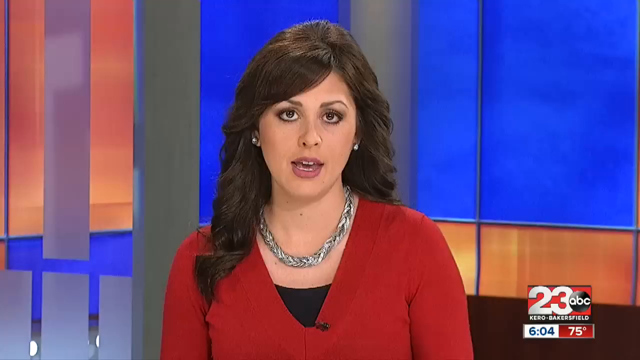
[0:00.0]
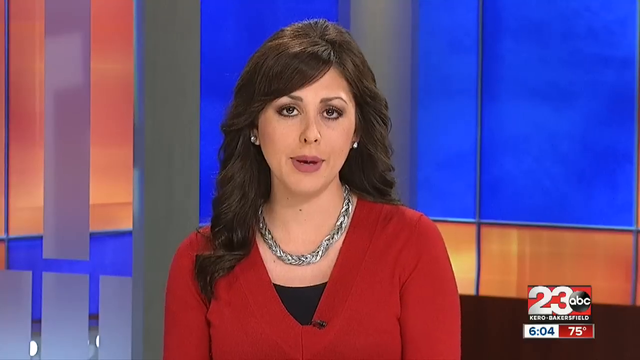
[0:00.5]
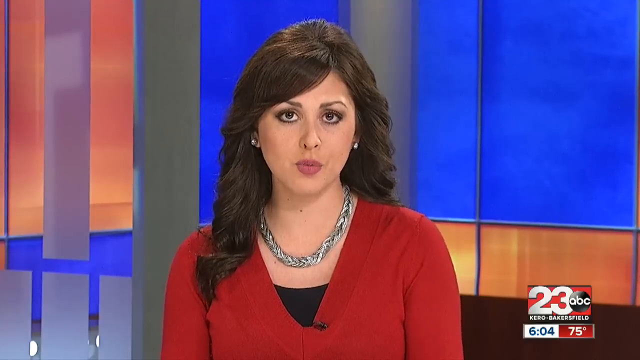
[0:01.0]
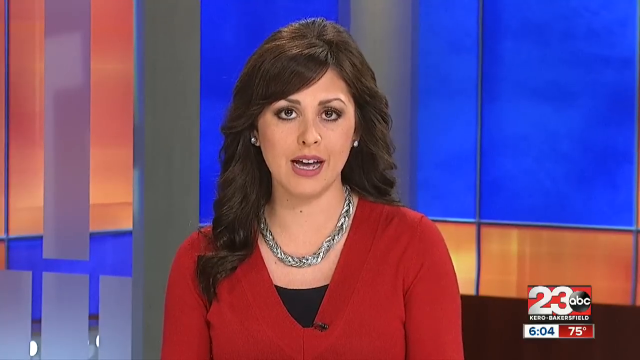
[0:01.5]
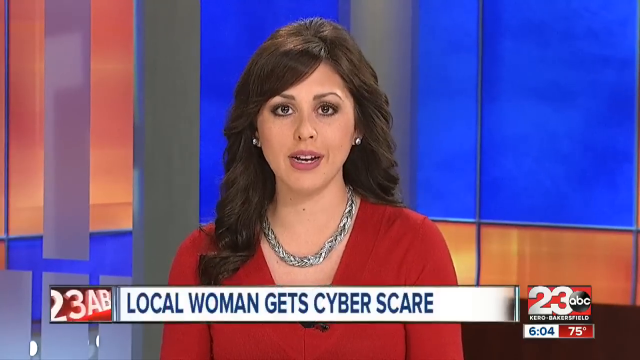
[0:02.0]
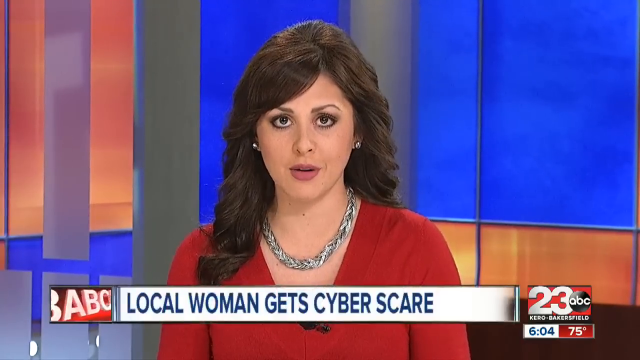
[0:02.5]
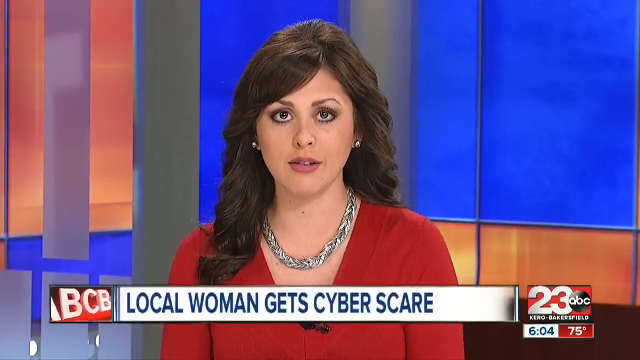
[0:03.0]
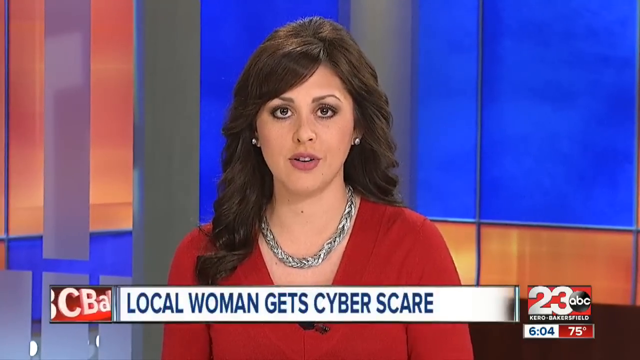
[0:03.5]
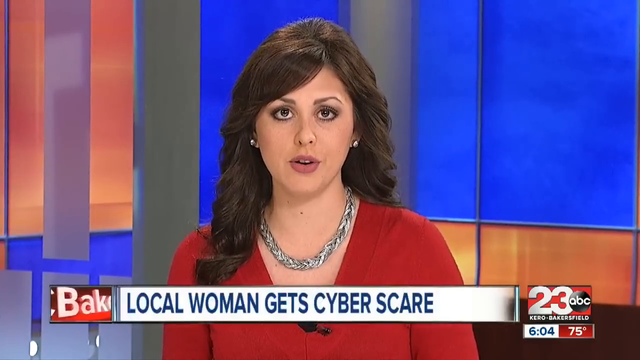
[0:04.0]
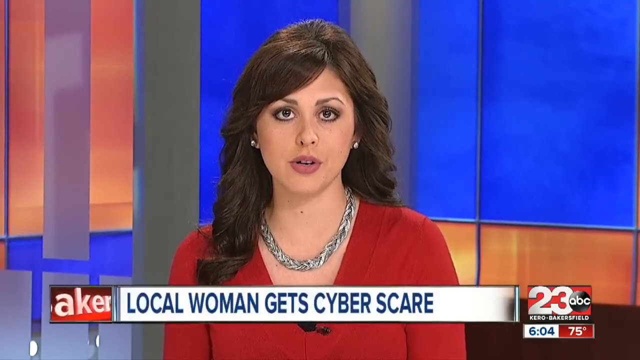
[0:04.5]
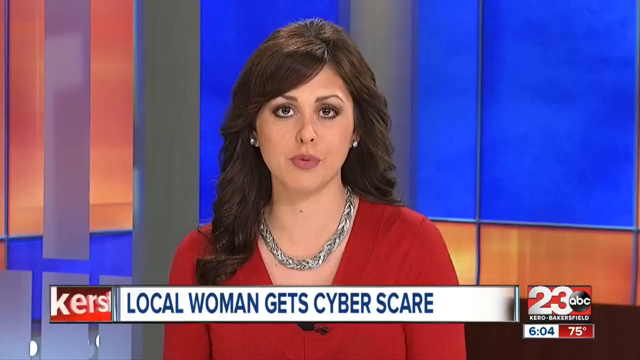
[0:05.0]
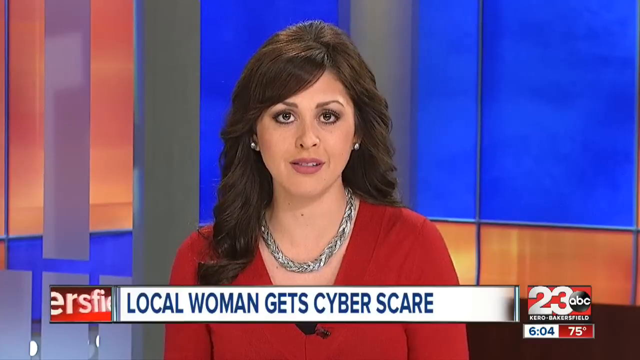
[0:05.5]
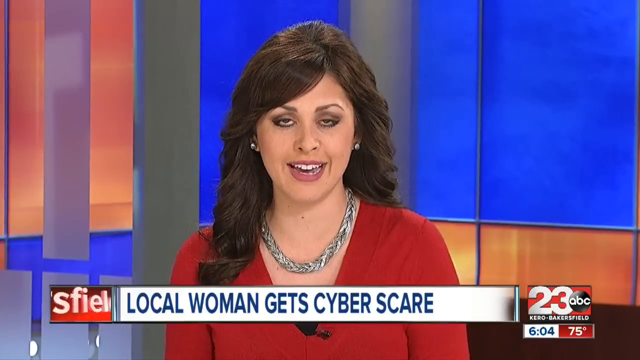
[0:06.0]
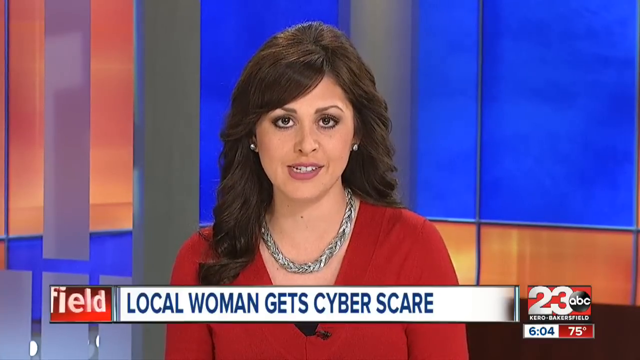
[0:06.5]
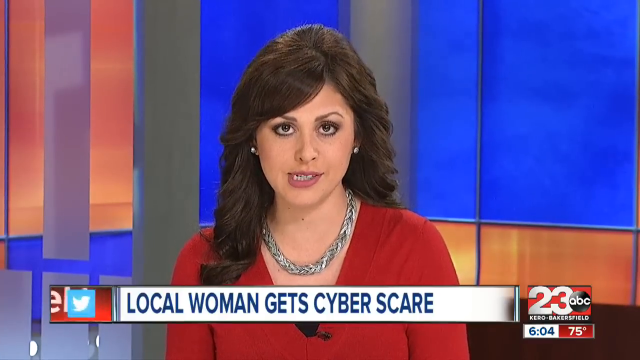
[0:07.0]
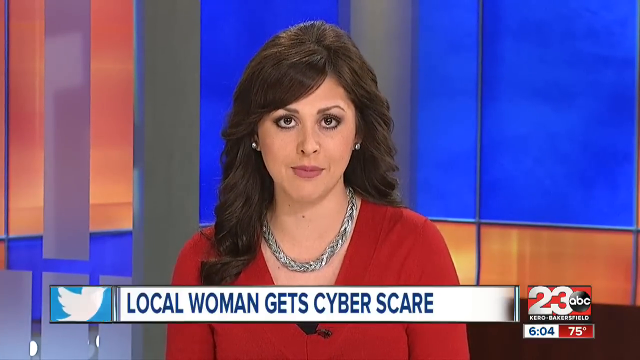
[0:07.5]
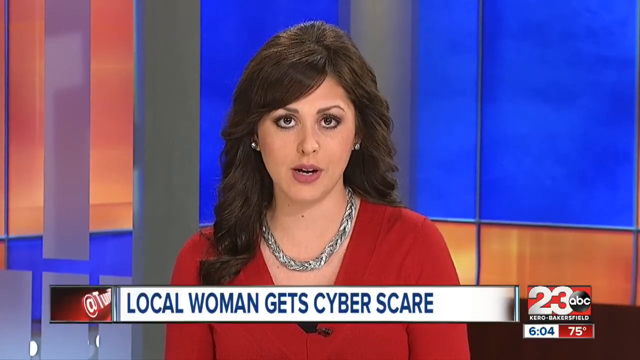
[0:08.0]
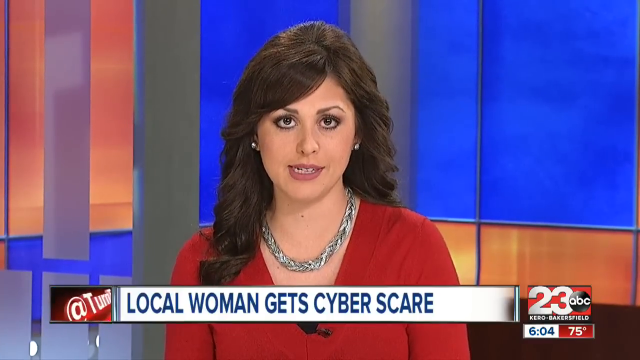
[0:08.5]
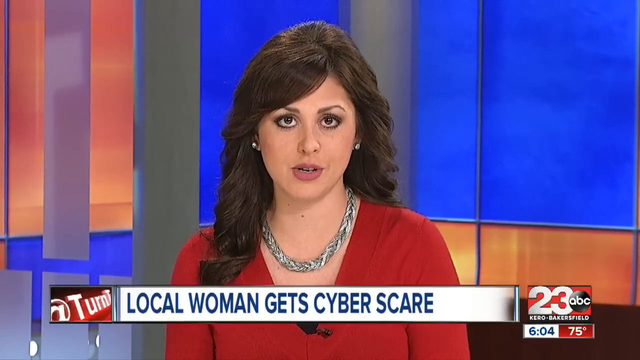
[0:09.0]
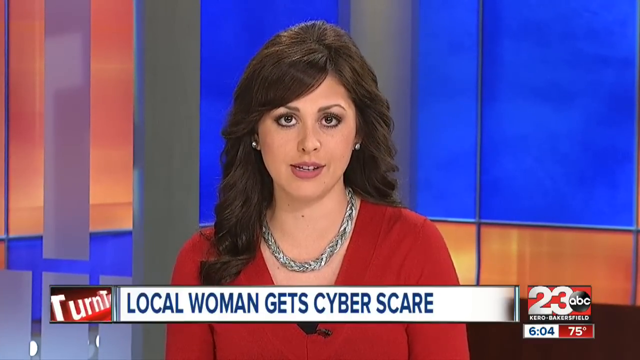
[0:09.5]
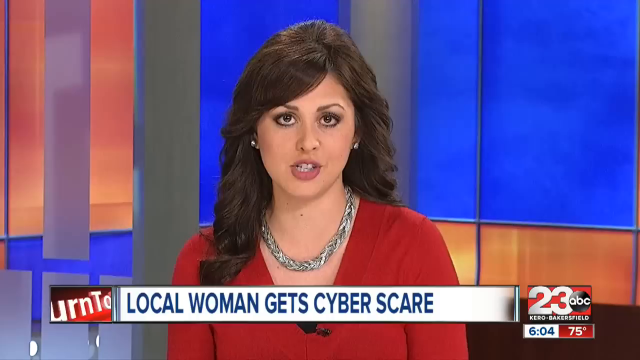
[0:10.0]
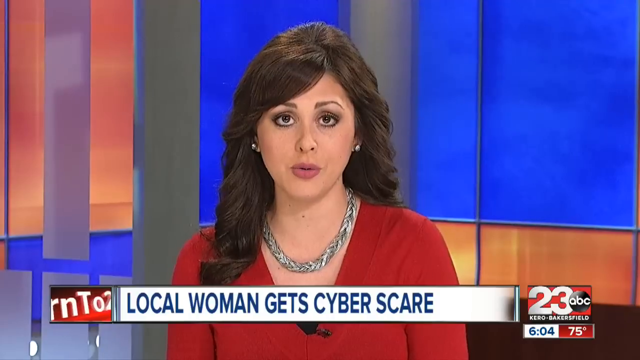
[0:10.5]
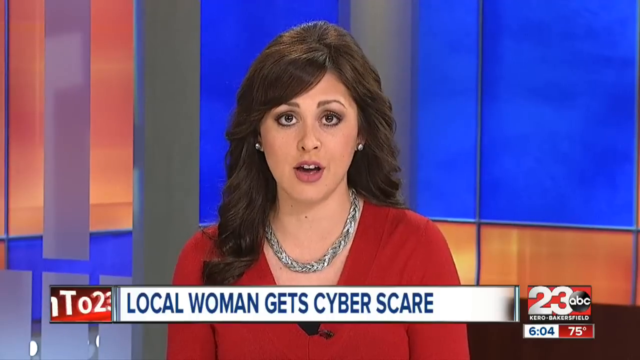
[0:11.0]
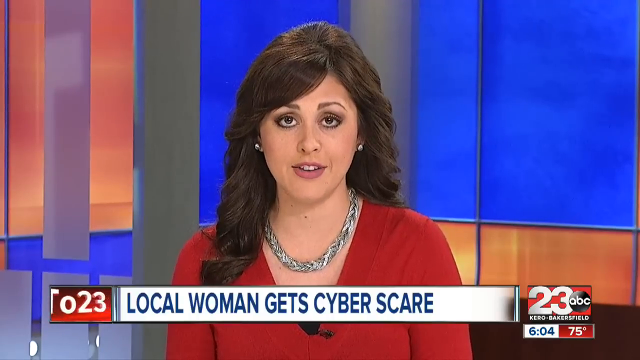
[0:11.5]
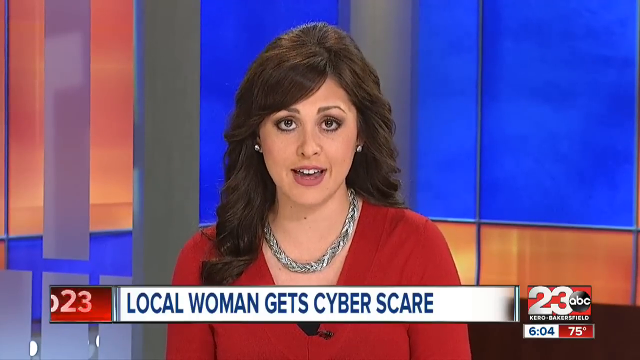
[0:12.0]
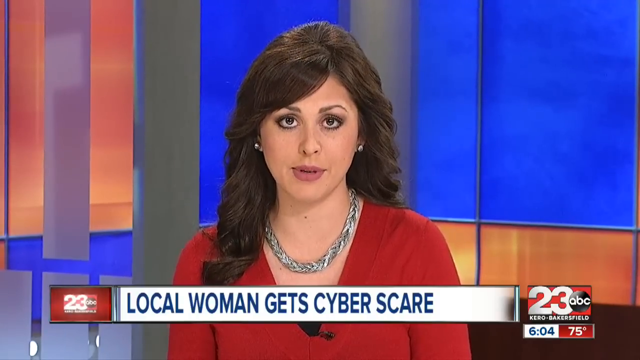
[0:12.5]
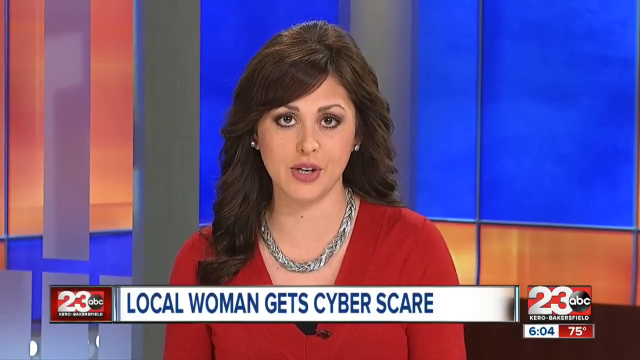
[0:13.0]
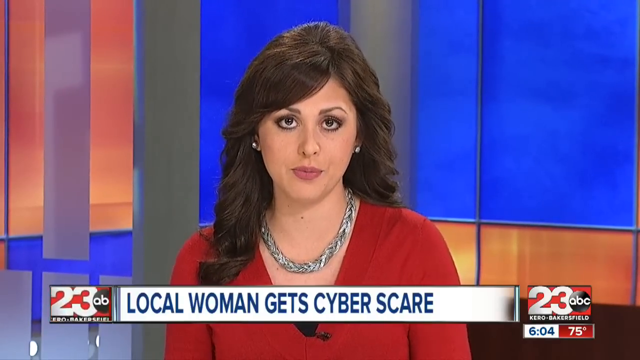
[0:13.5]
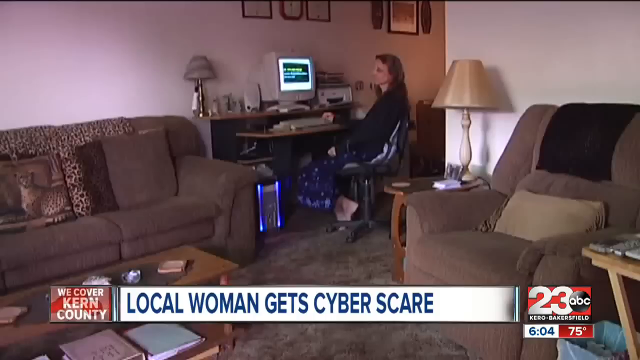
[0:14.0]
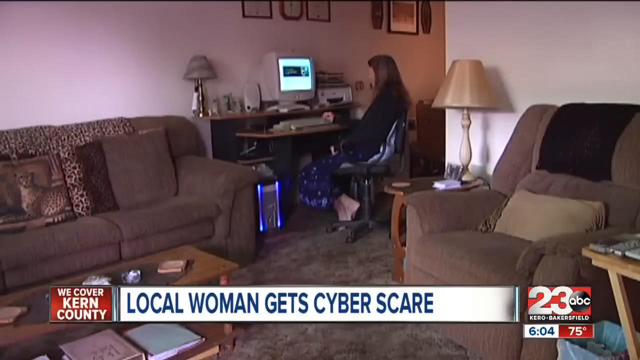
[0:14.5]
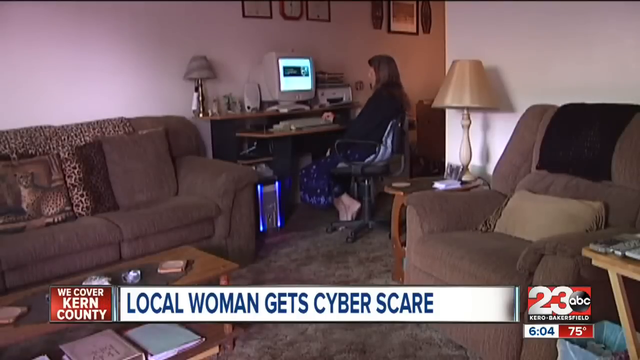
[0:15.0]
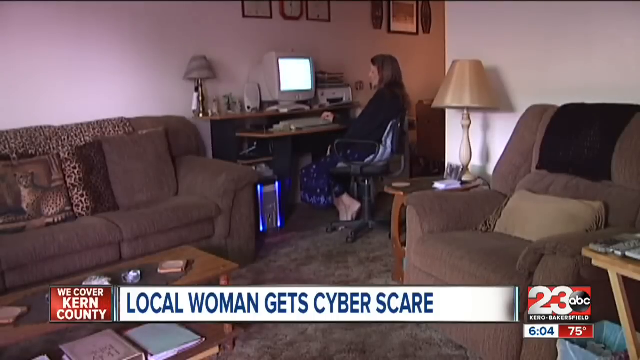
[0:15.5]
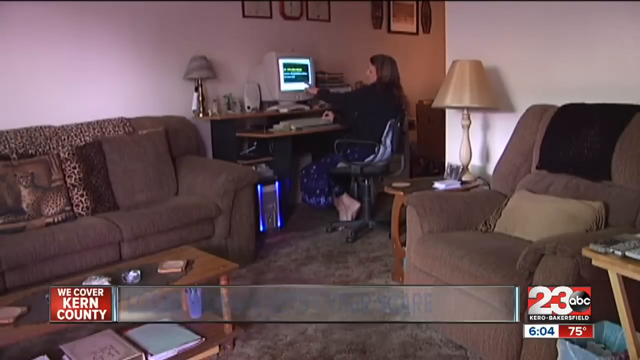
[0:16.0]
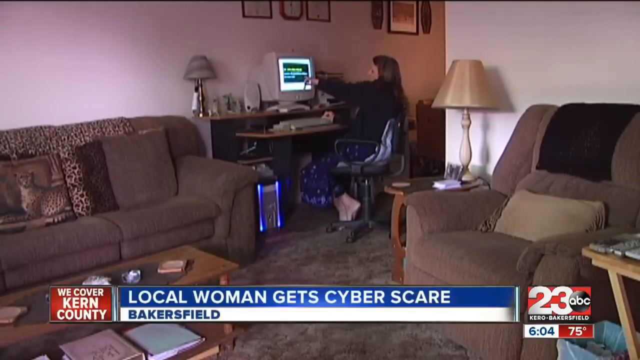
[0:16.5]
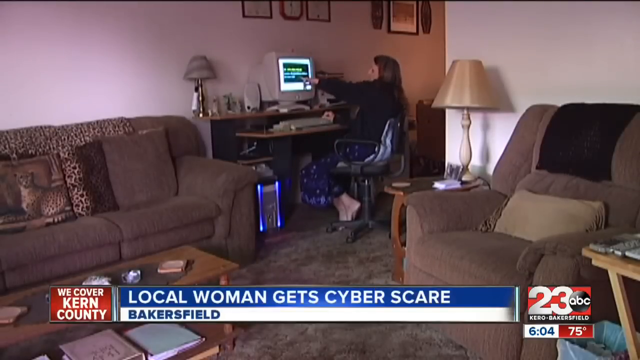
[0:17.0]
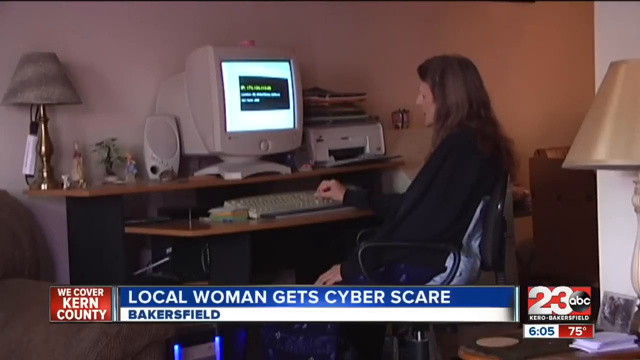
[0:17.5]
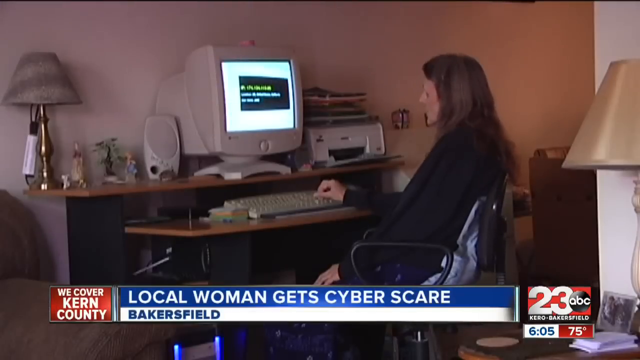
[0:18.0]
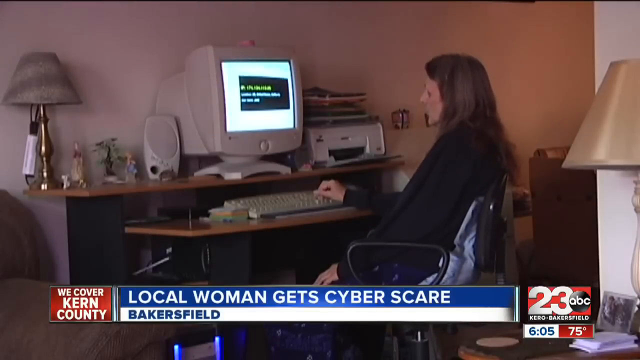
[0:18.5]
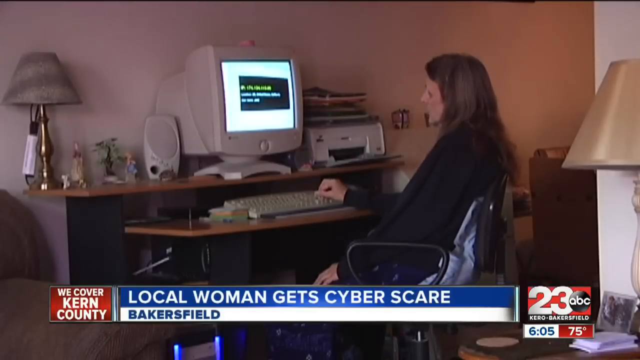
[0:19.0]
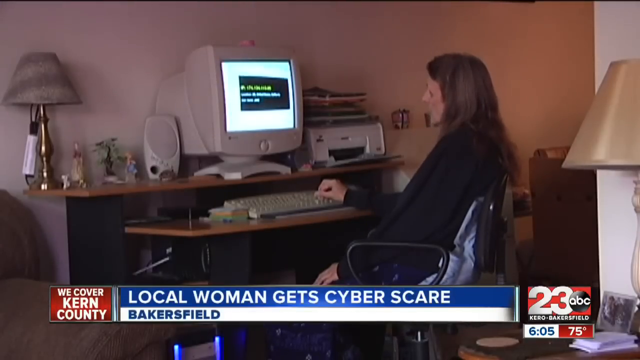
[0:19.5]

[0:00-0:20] The video opens on ABC channel 23 Kero in Bakersfield, as indicated in the bottom right-hand corner. The 23 is in white letters on a red background, and to its right is the ABC symbol, a black sphere with white writing. Underneath, the time, 6:04, is on the left, and the temperature is 75. A news correspondent faces the camera: she is in her late 20s or early 30s, with dark hair and dark eyes, wearing a red top with white under it and a black shirt underneath. The headline below her reads "Local woman gets cyber scare." The scene then moves to someone's living room, where in the corner there is a desk with a woman sitting in a chair at it. Text in the bottom left-hand corner reads "We cover Kern County."